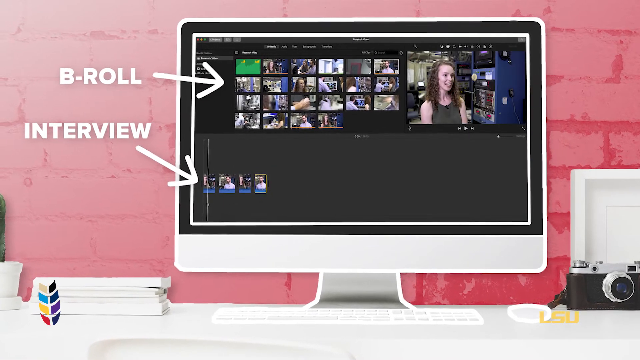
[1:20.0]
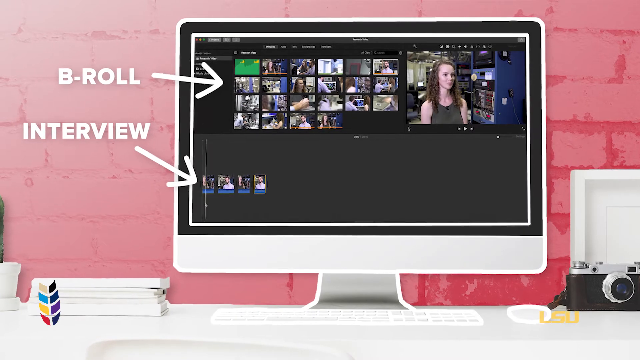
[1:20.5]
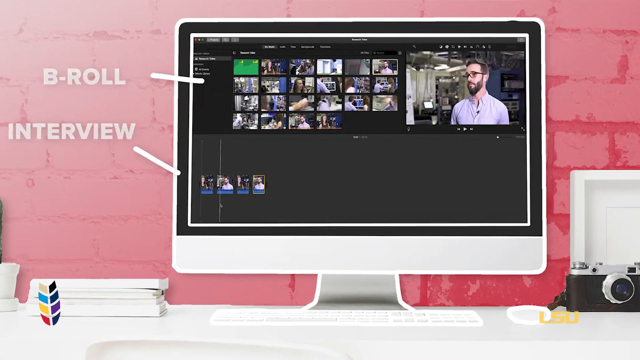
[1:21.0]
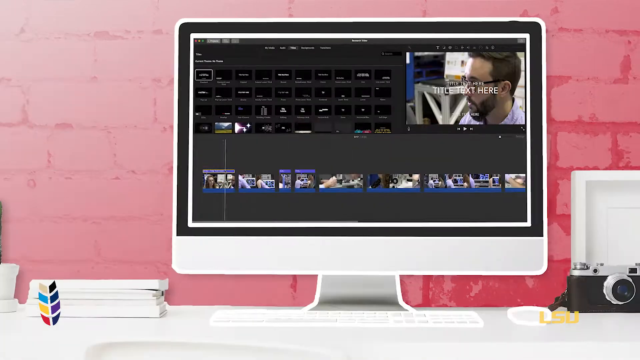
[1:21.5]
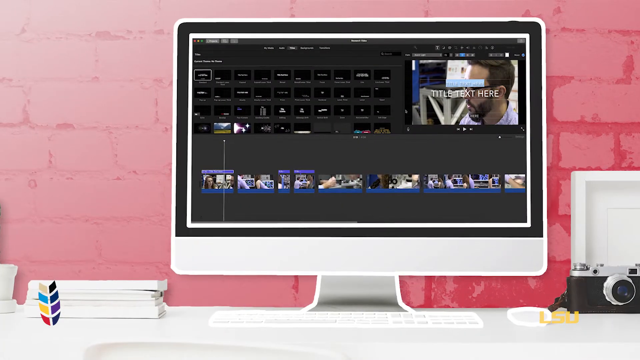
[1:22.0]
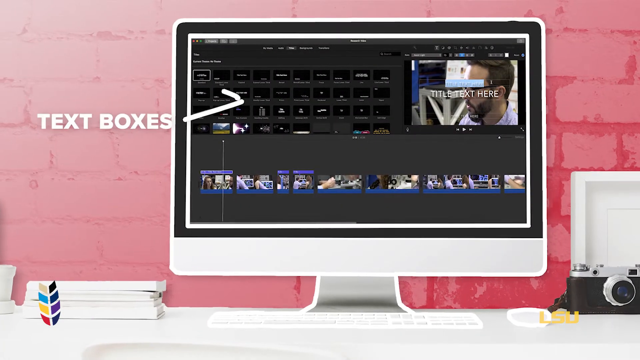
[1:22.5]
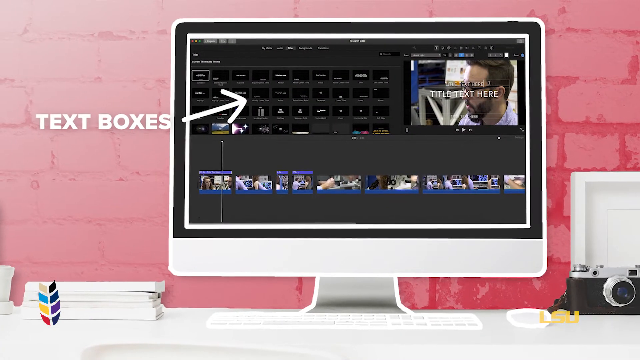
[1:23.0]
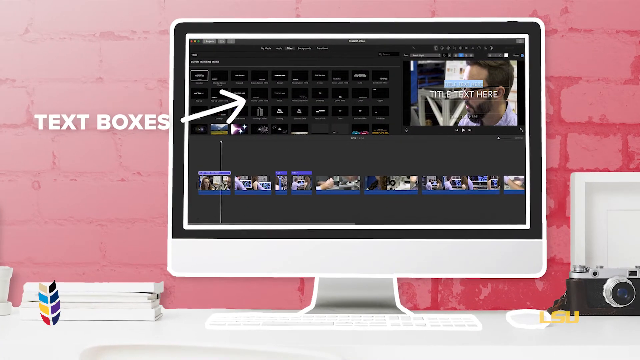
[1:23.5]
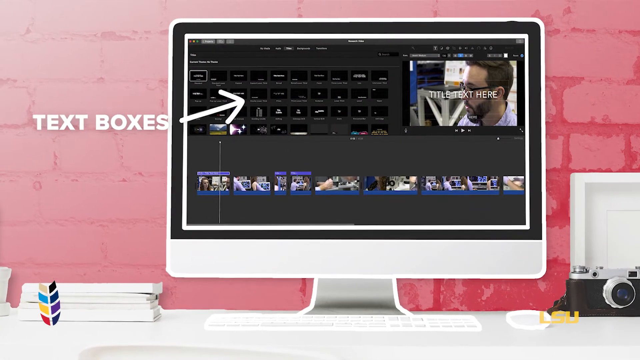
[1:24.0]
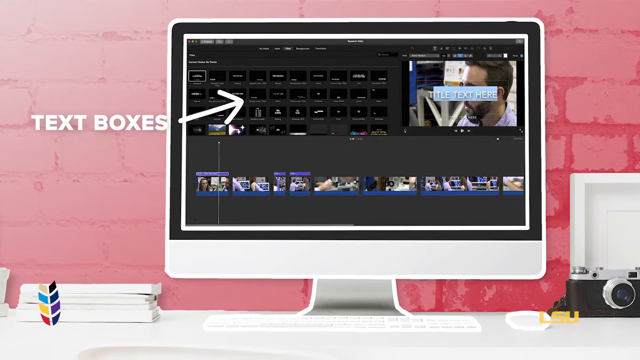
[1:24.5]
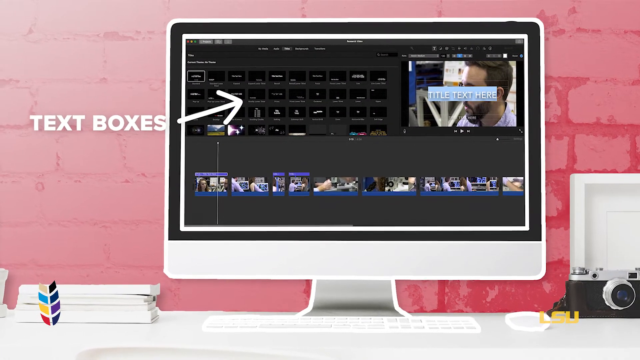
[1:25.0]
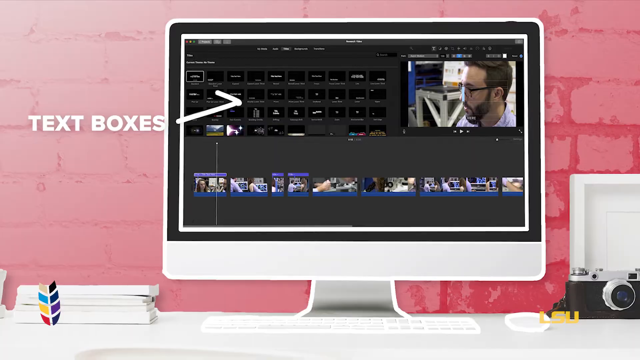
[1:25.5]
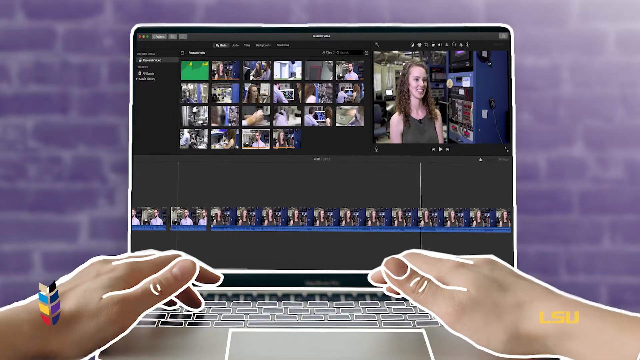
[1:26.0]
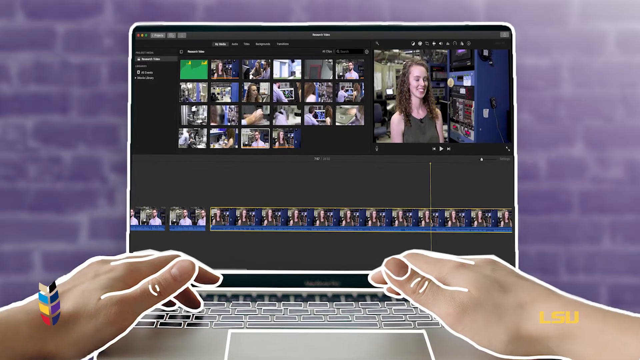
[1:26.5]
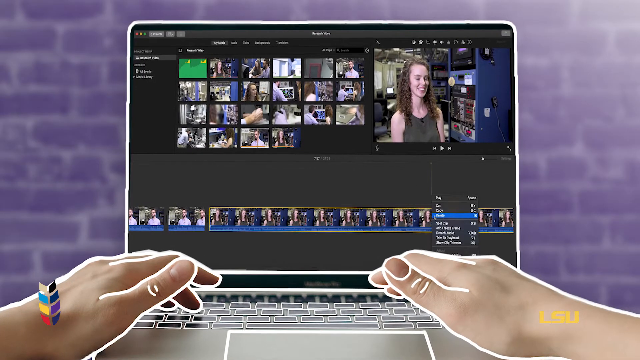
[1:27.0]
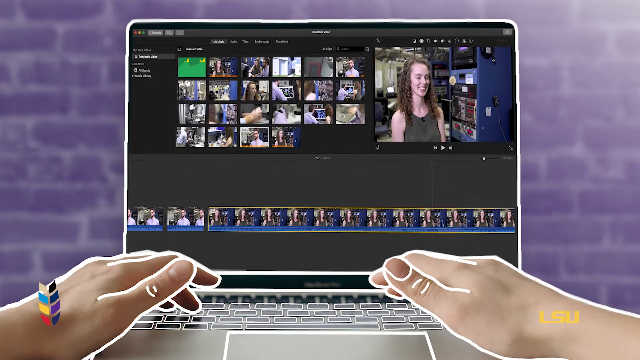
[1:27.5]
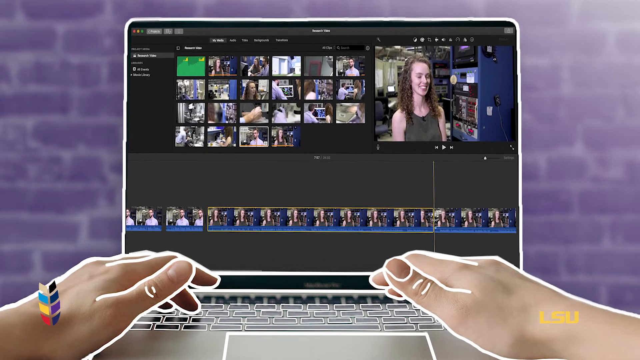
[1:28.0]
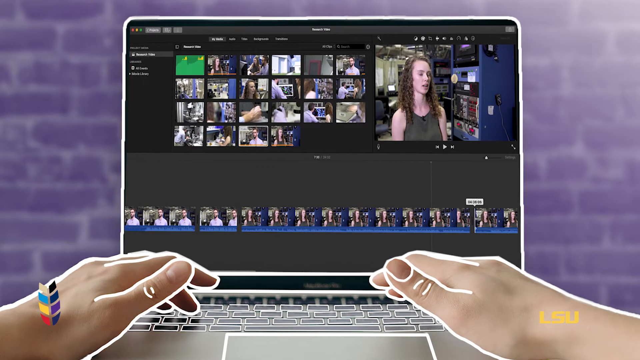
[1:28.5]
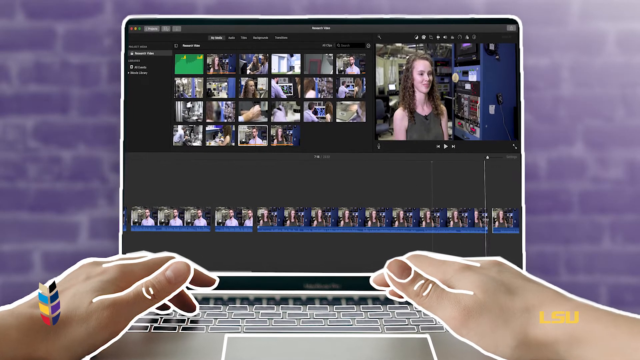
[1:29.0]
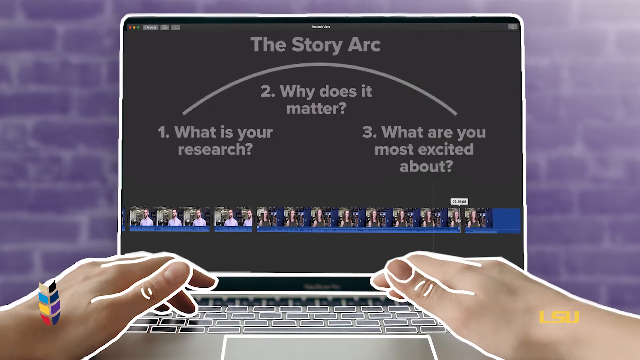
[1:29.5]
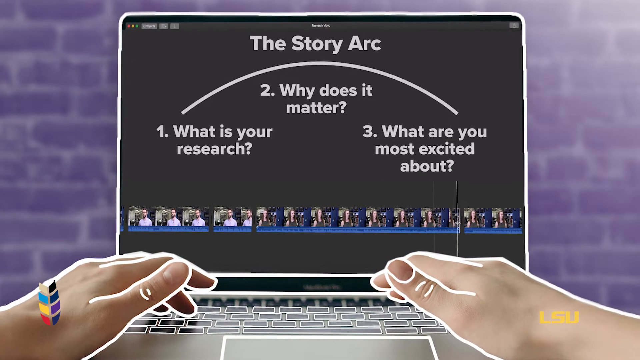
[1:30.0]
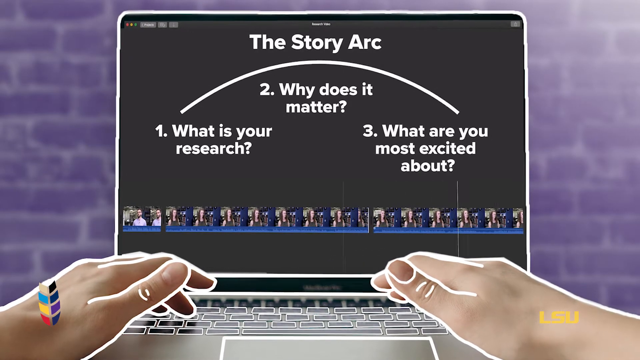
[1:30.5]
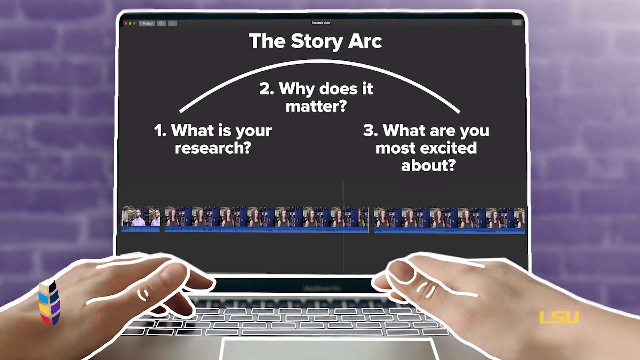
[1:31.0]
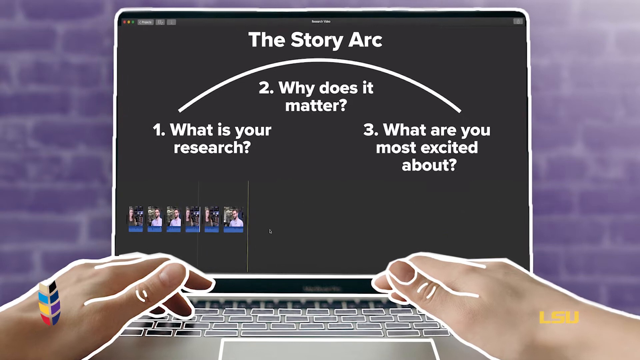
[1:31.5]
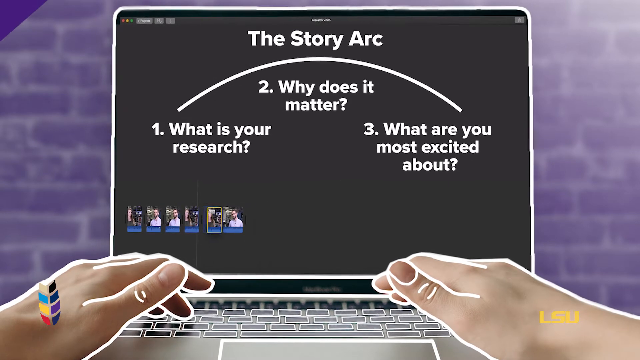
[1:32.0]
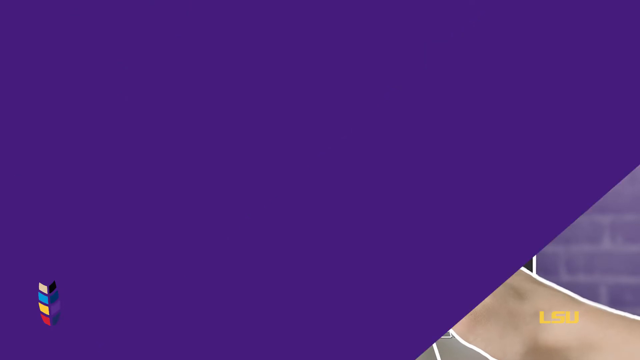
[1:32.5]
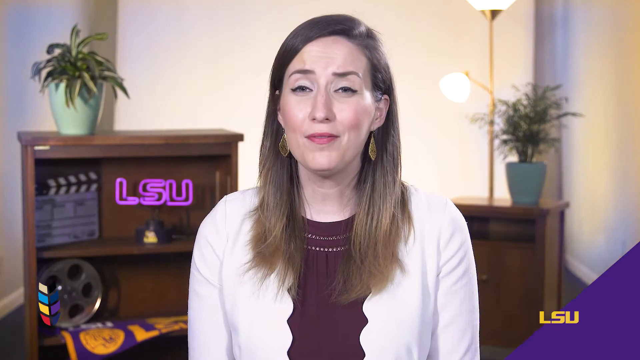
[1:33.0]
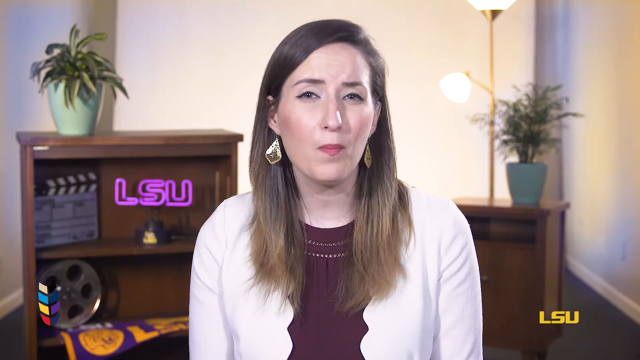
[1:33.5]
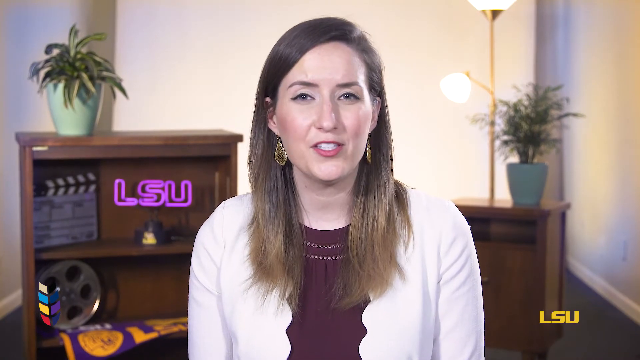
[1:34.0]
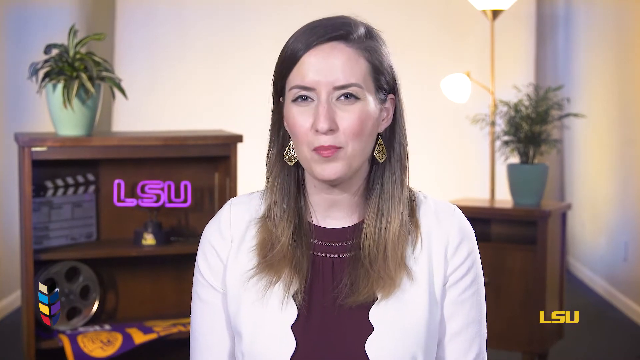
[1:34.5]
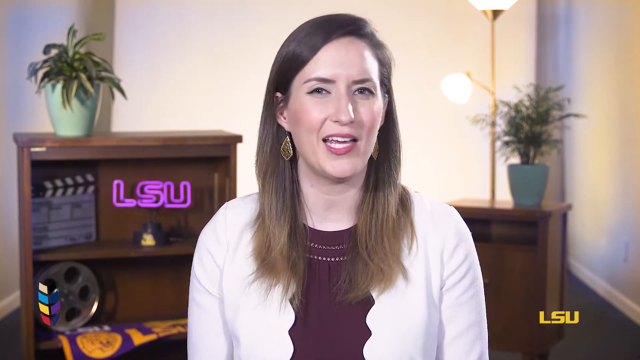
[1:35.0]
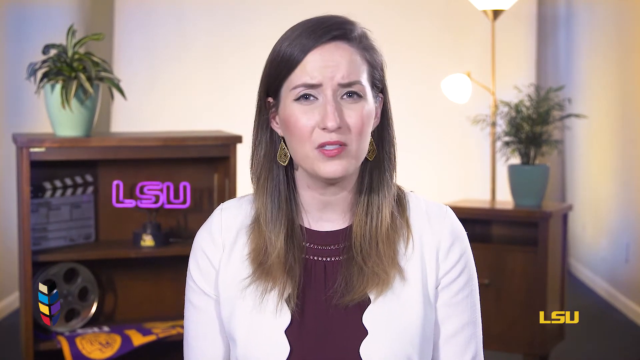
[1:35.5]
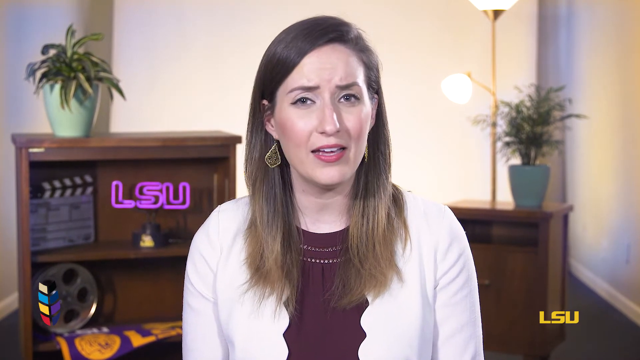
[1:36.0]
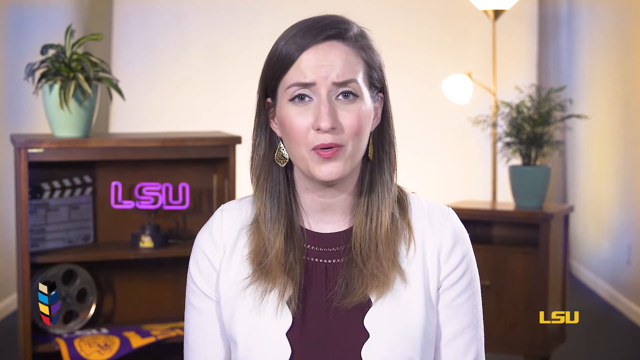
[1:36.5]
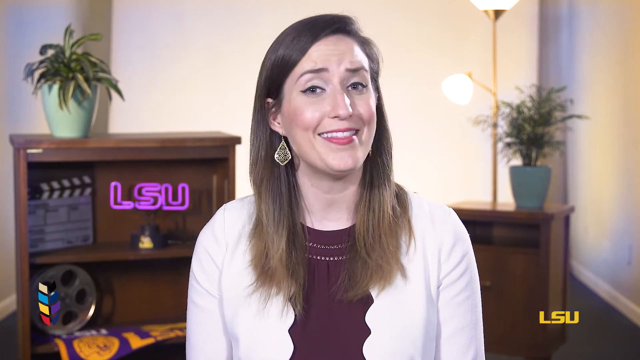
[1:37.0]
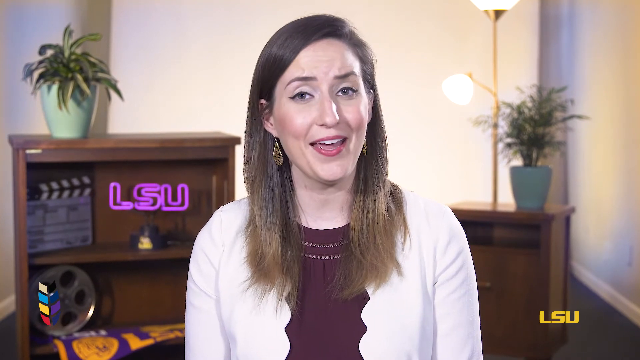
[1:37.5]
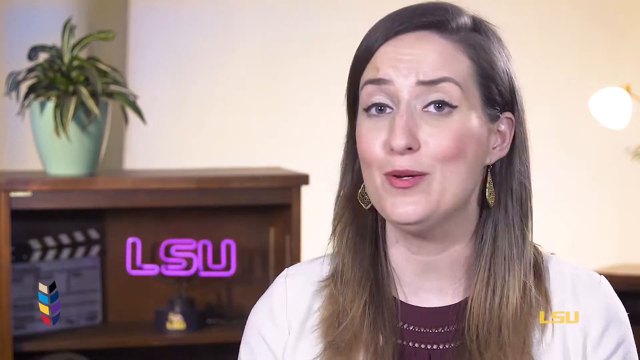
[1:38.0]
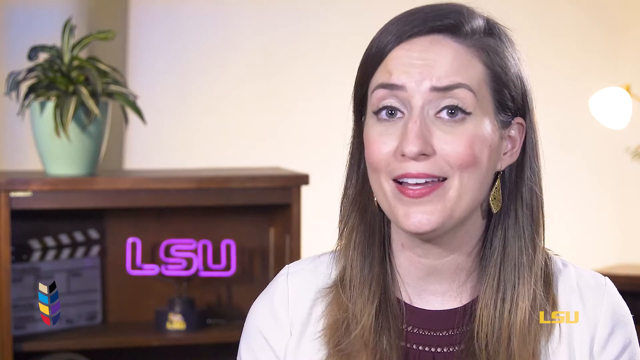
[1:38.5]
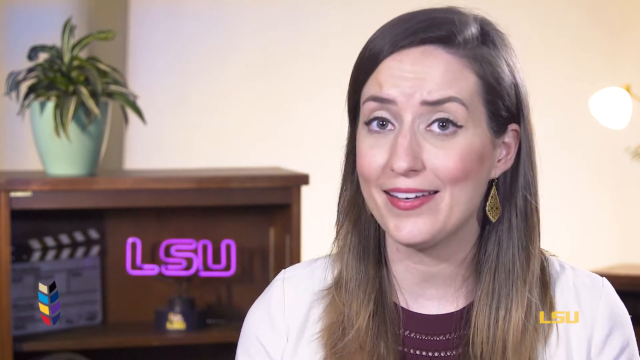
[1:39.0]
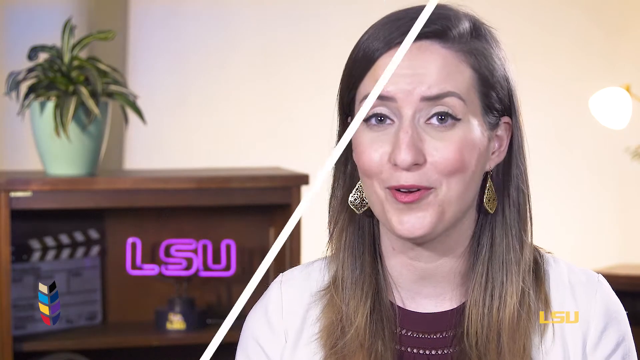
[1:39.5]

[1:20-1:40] An animation shows a computer screen where someone looks like they are editing videos, with captions explaining what is going on. At the beginning the caption says "b-roll"; other captions say "interview" and "text boxes." At some point the story arc is written out with its components: "what is your research," "why does it matter," "what are you most excited about?" The computer screen image is set at first against a pink brick wall and then against a purple brick wall. The video cuts to the narrator, a white woman with long brown hair and blue eyes wearing a white cardigan over a burgundy blouse, who is saying something. Behind her are a couple of small bookcases with potted plants on each. The bookcase to her right has a lit-up neon sign of the letters "LSU."